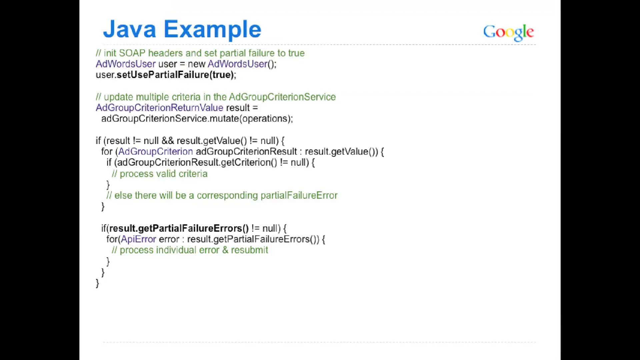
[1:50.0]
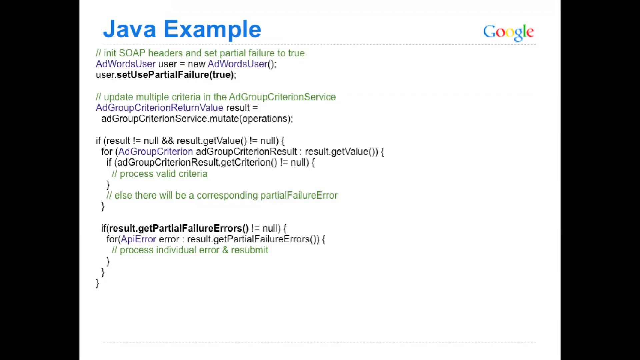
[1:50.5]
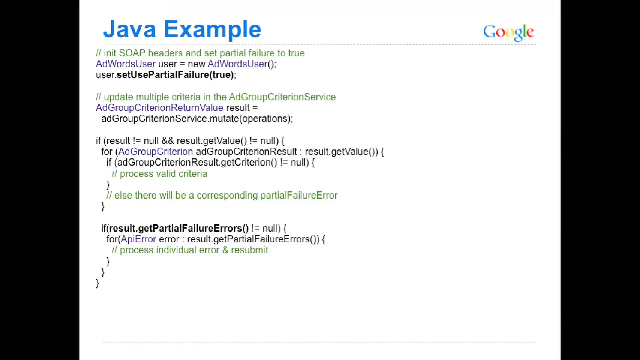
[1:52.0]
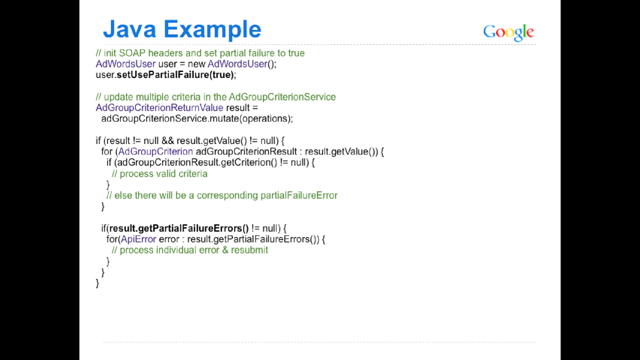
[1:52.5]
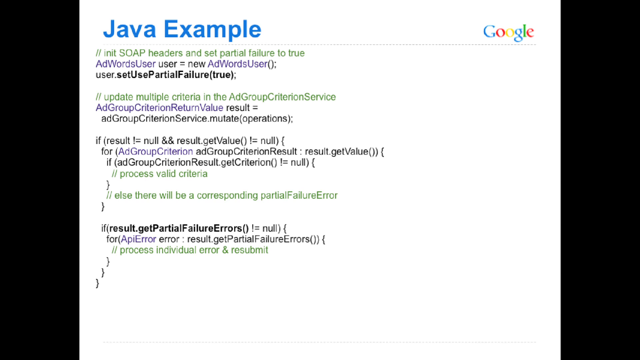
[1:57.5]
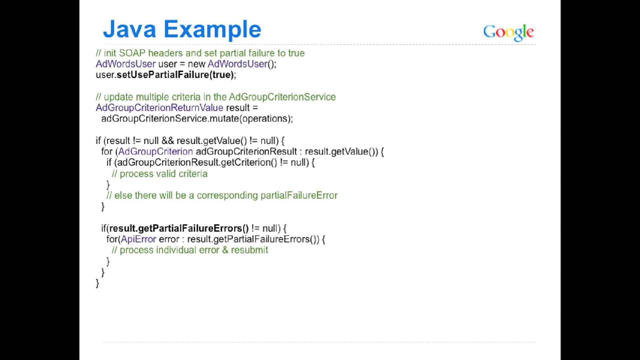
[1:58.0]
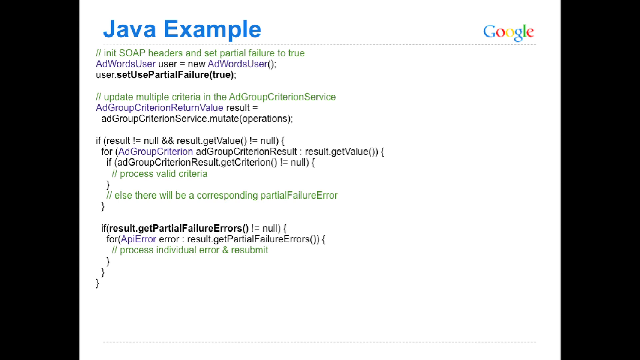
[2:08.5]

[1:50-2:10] The slide reads "Java example," with the Google logo on the right-hand side and a dotted separation line underneath. Below is what is apparently an example of the code for the first page in a different language. This code is clearly different from the previous code but shares some of the same header information. It is arranged in groups, with the commands apparently separated by a couple of spaces, and brackets at the end. The slide stays up for a good while. The code area is highlighted, and the regular text is apparently black.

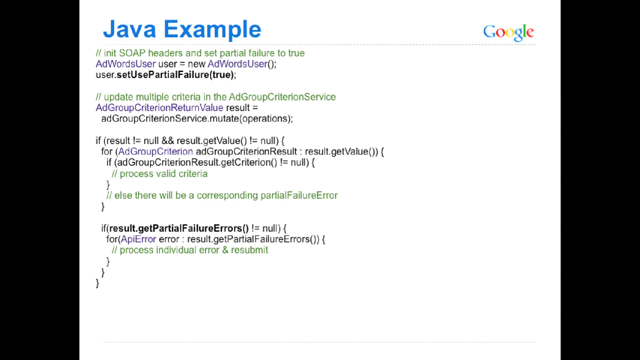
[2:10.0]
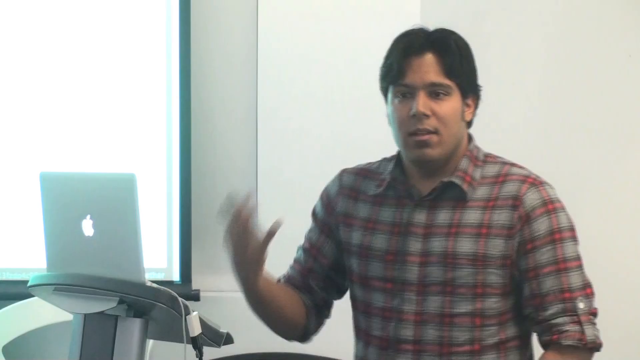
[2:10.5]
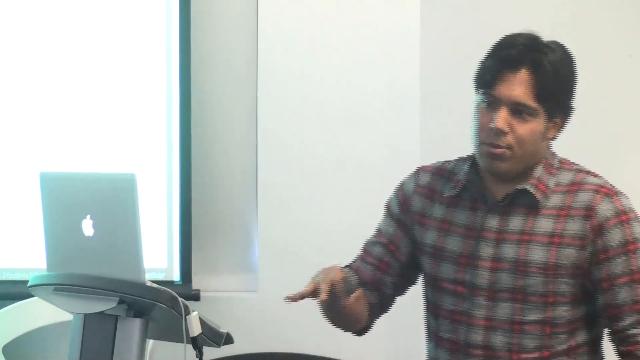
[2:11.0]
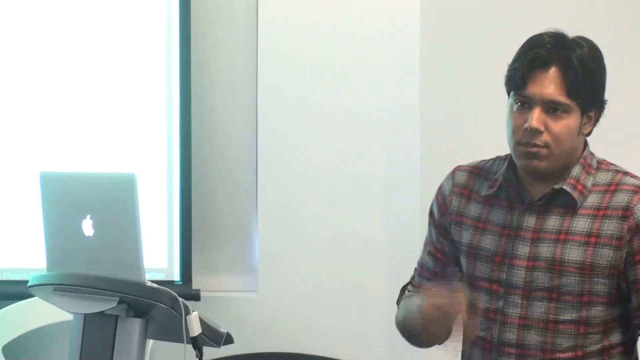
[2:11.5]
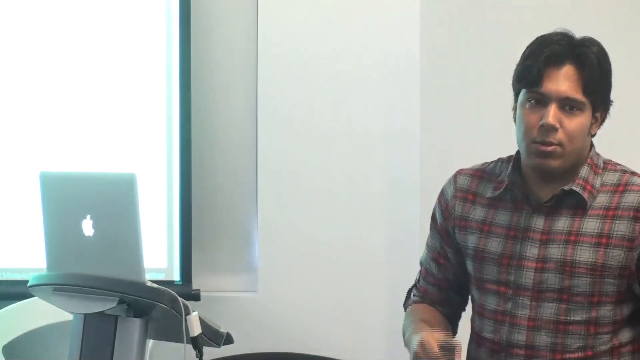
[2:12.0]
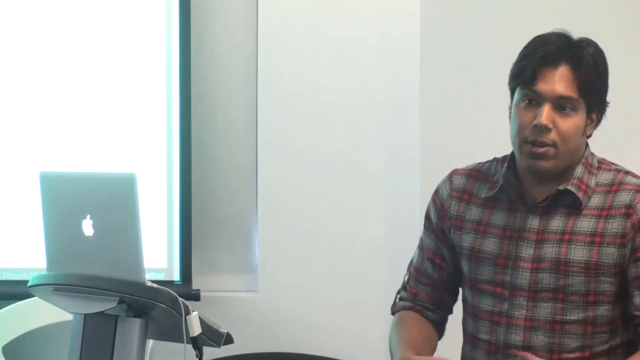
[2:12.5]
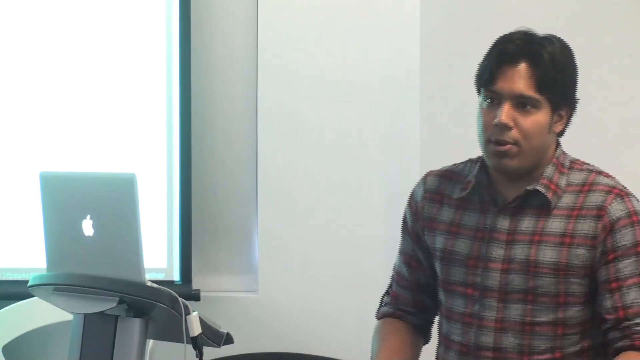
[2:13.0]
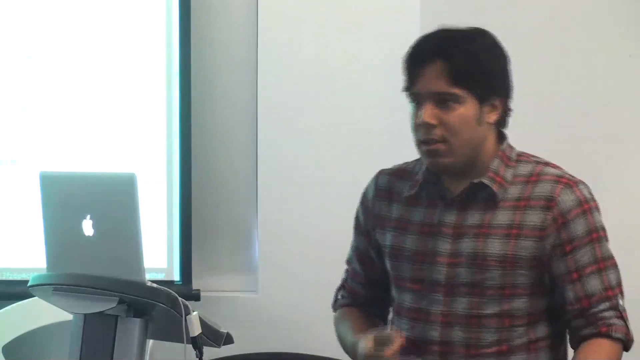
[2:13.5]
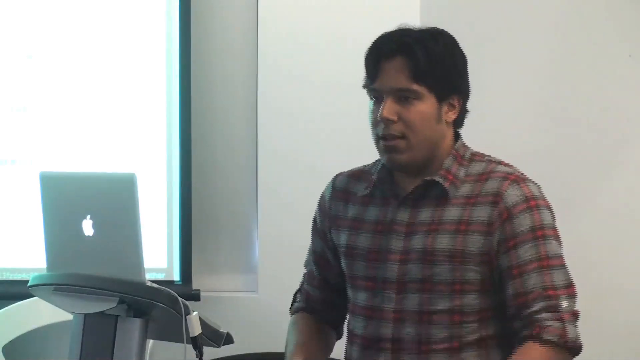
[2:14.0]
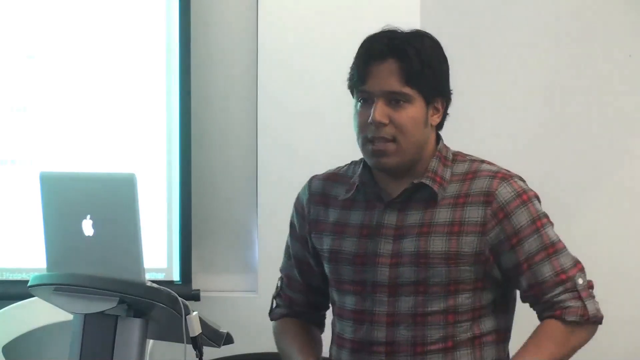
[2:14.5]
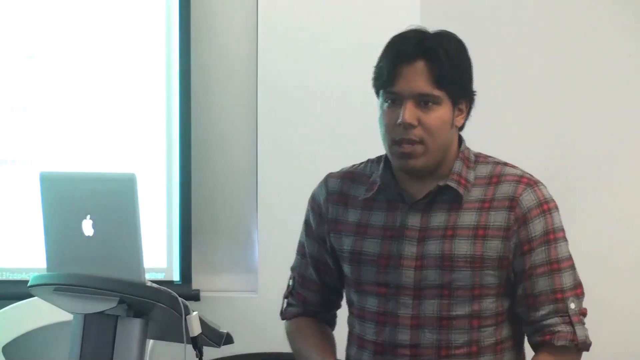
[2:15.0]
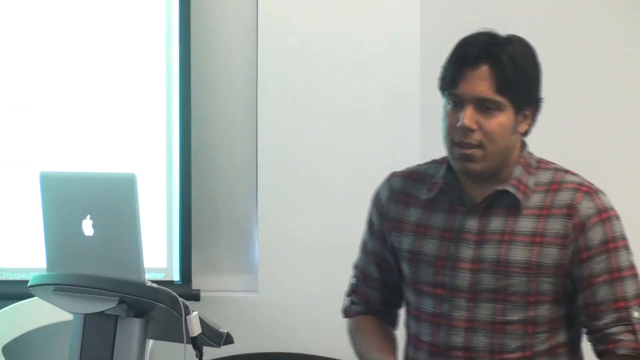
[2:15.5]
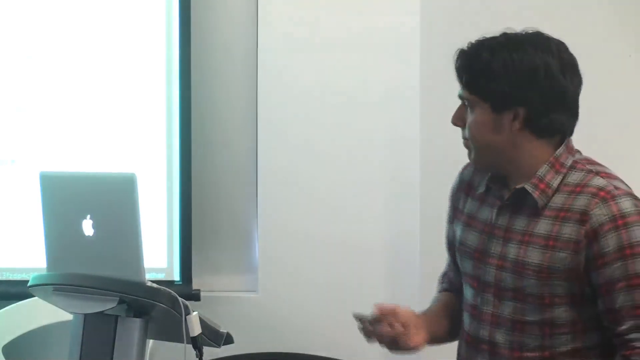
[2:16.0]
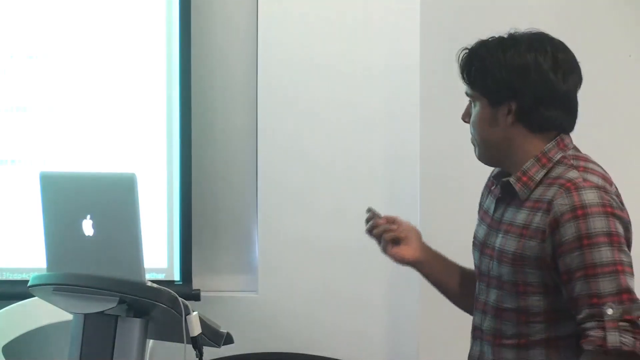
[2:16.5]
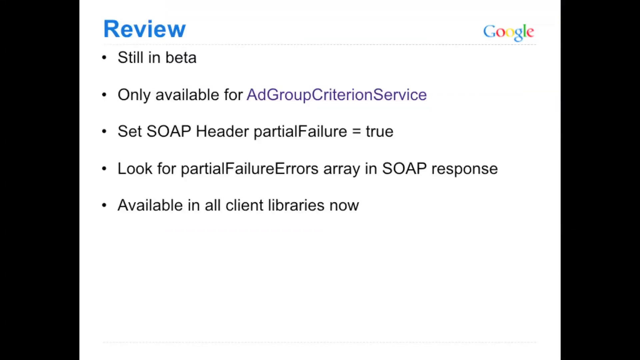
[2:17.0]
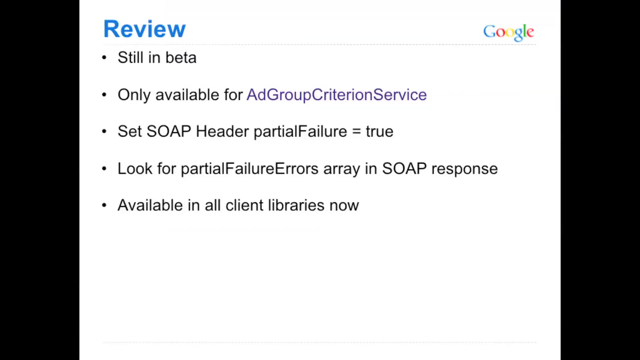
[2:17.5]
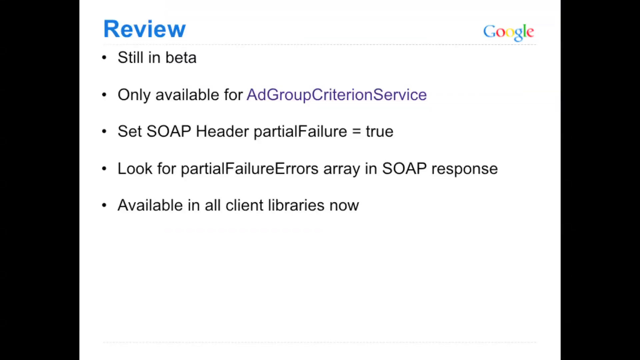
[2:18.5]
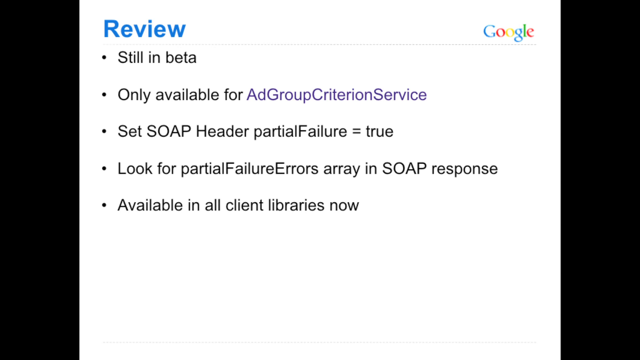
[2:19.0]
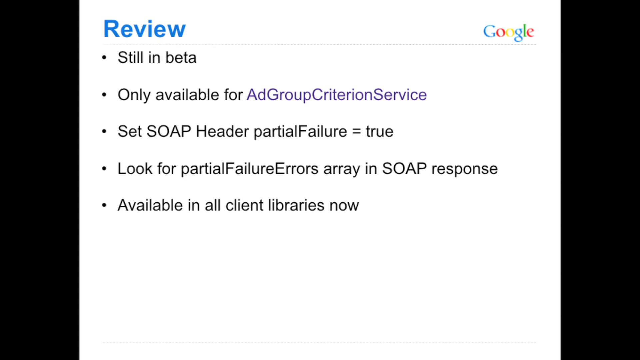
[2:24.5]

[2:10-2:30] The "Java example" slide still shows the same text and format. The video returns to the man, who has turned away from the screen toward what seem to be people; he looks from one area of the room and glances around at others on both sides, apparently in a classroom-type setting. He turns and points the controller at the screen, and a slide titled "review" appears with the Google logo on the right-hand side. Its bulleted points include "this is still in beta," "only available for ad group criterion service," "set SOAP header partial failure equal true," "look for partial failure errors," and "available in all client libraries." The slide stays up for a little while.